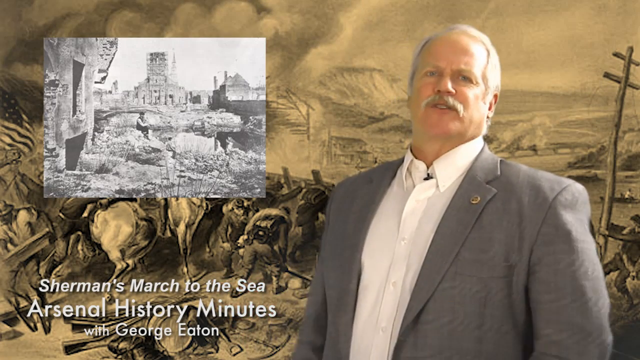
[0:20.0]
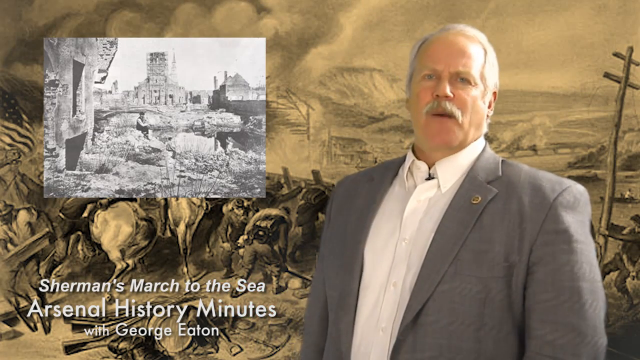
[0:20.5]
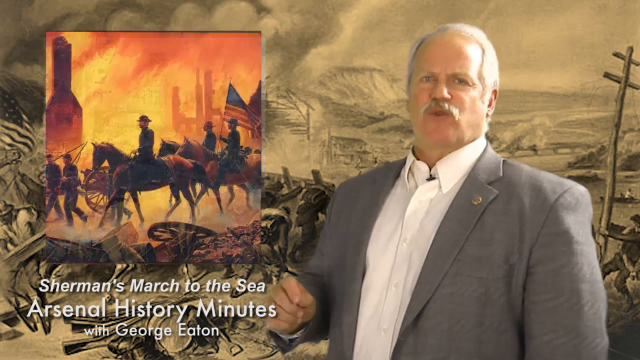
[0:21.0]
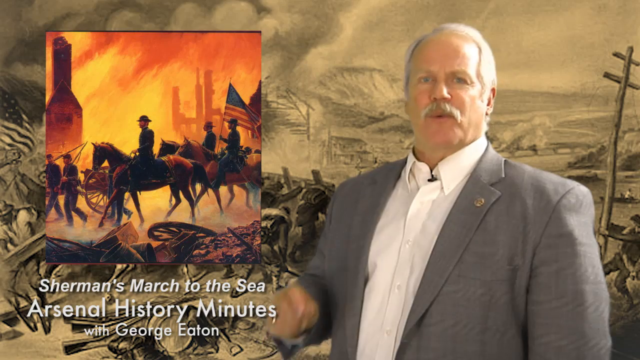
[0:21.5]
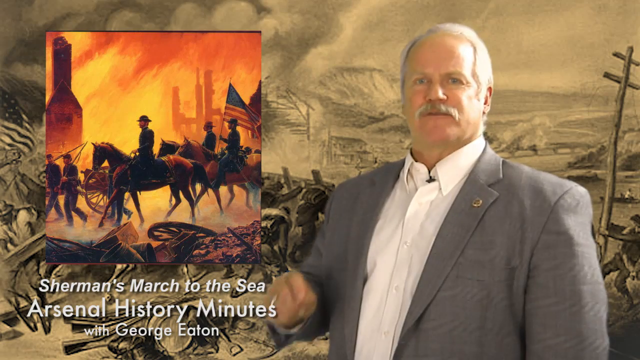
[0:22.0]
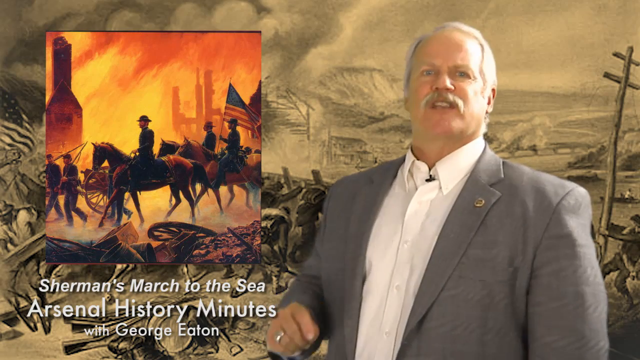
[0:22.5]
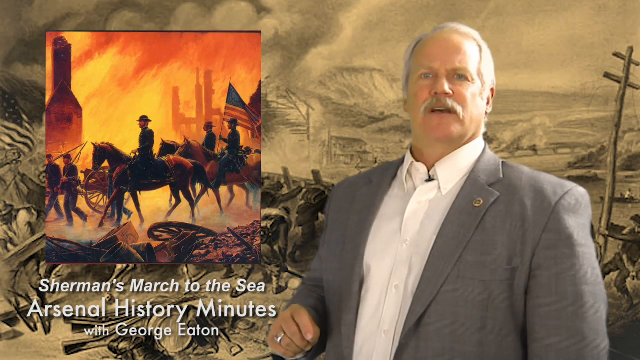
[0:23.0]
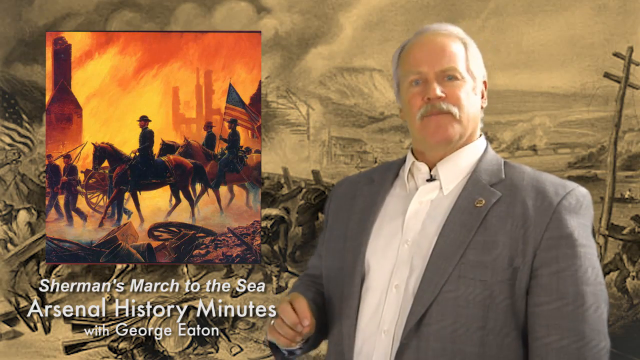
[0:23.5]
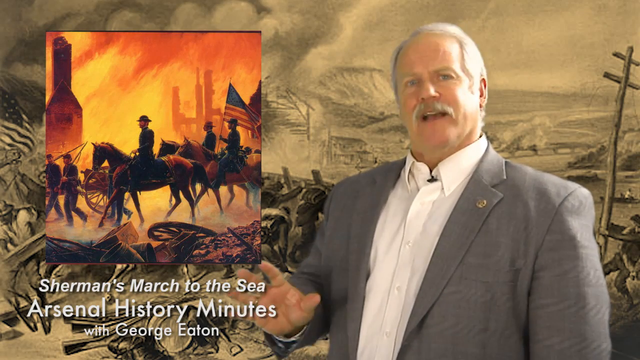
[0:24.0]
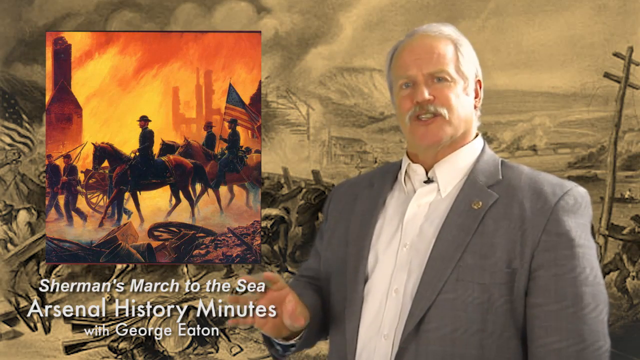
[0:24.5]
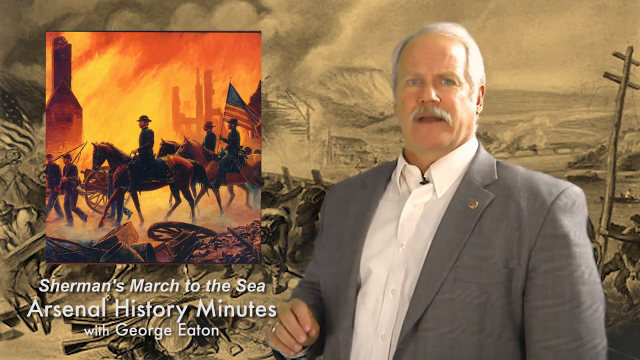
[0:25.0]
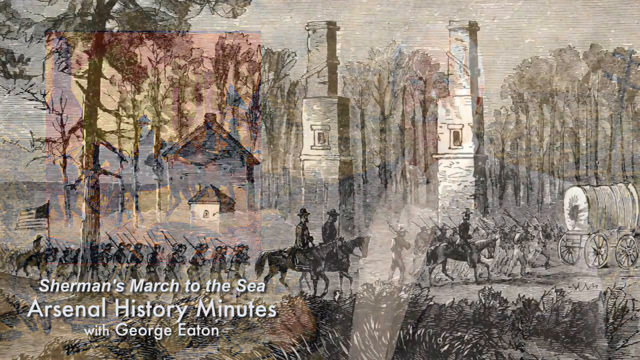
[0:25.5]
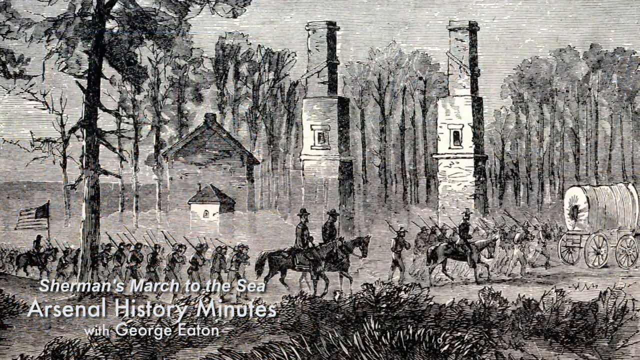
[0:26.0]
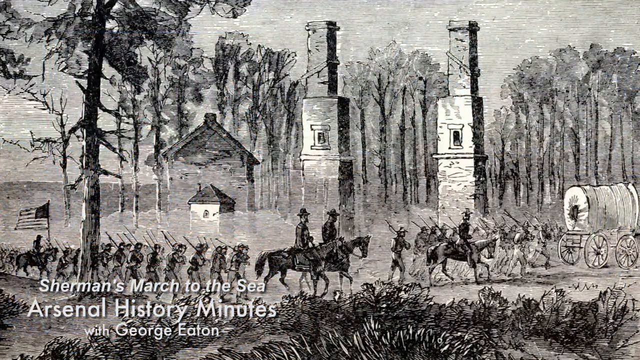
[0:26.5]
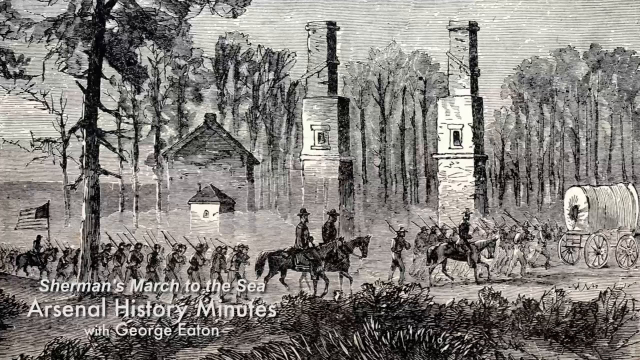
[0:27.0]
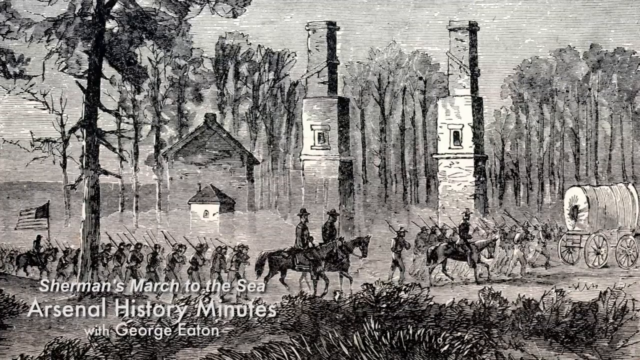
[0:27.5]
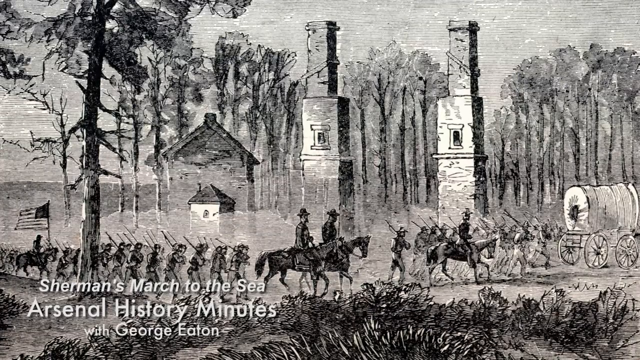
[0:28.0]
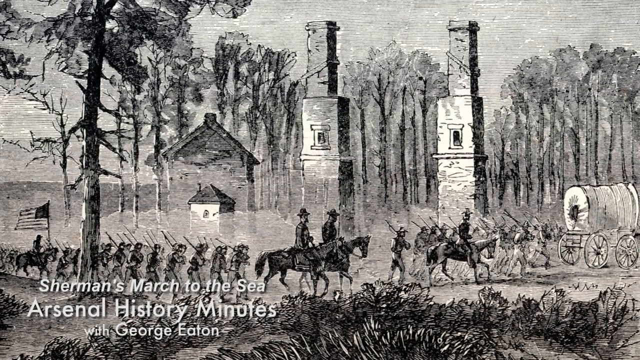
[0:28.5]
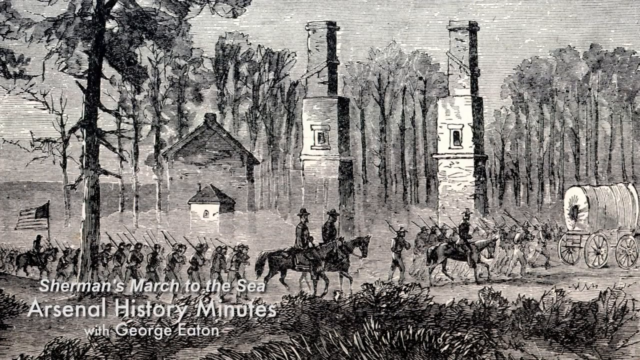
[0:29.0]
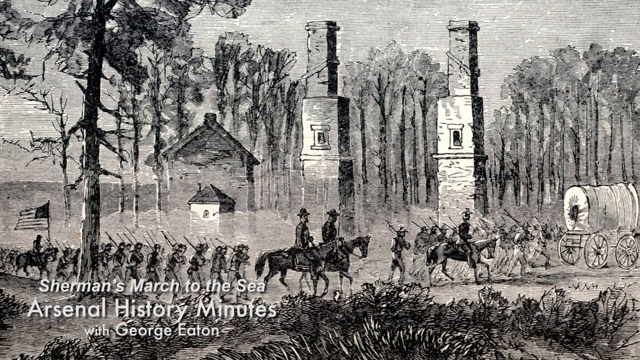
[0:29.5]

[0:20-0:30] A man who appears to be a narrator is on the right side of the frame, facing and talking to the viewer. He looks like a somewhat chubby white man with white hair and a big mustache, apparently in his 50s or 60s, and wears a gray coat over a white shirt, with a pin on the left collar of the coat. At the top left is a black and white picture of a man sitting down with ruins in the background, and white text at the bottom left reads "Sherman's March to the Sea, Arsenal History Minutes with George Eaton." The man talks and gestures with his right hand. The picture on the left changes to what looks like three men on horseback and two men walking with a cannon, marching toward the left, with a lot of fire in the background. The man at the back on horseback holds an American flag that waves backward toward the right. The man on the right keeps talking, waving his right hand, then turns his palm face down and puts his thumb and fingers together. The scene then transitions to a black and white picture of what looks like another army. In the middle, two men on horseback ride toward the right. On the left, a group of men who look like infantry, with rifles over their shoulders, march toward the right, and on the far left there appears to be an American flag waving toward the left. On the right there appear to be more infantrymen and one man on horseback, and a wagon moves toward the right. Two chimneys and trees are in the background.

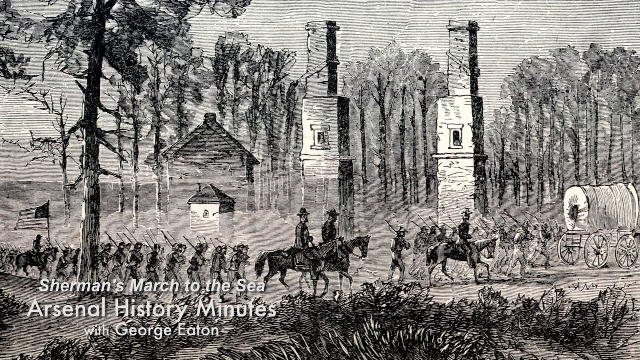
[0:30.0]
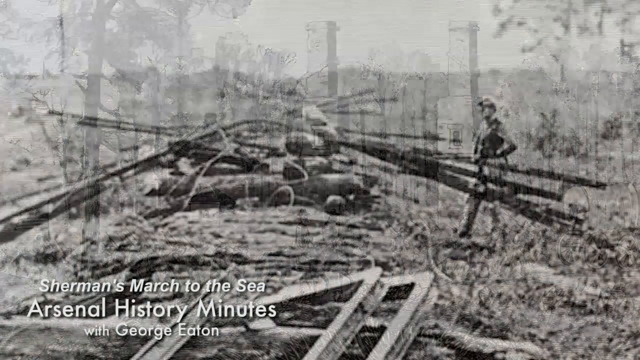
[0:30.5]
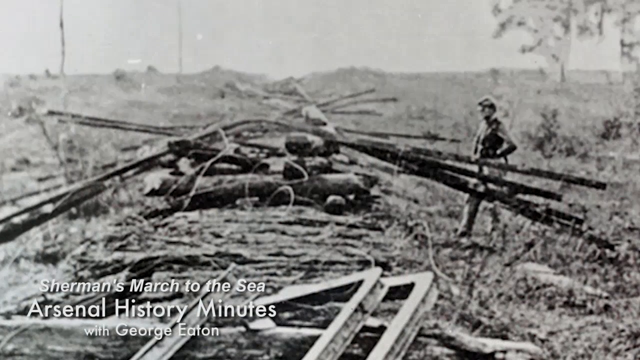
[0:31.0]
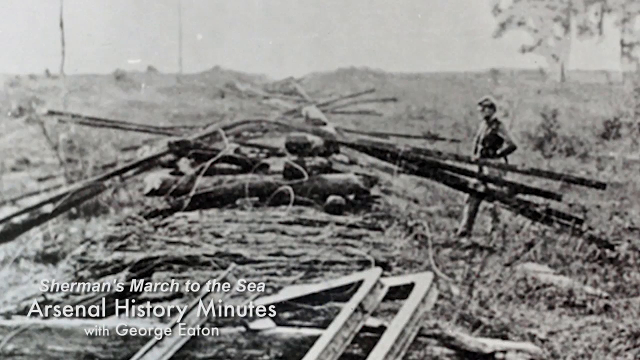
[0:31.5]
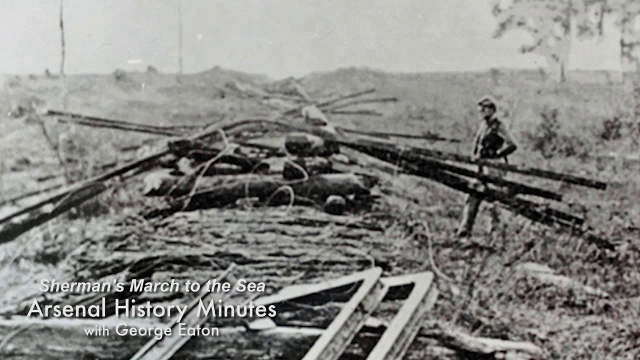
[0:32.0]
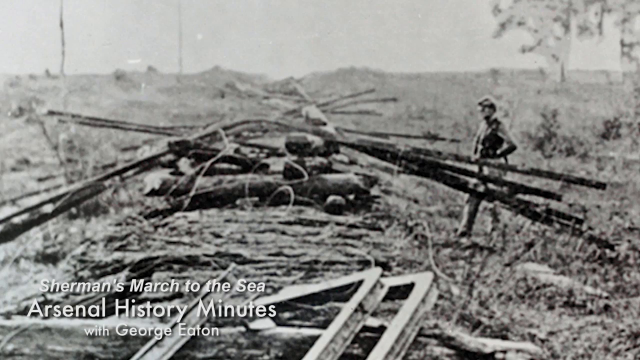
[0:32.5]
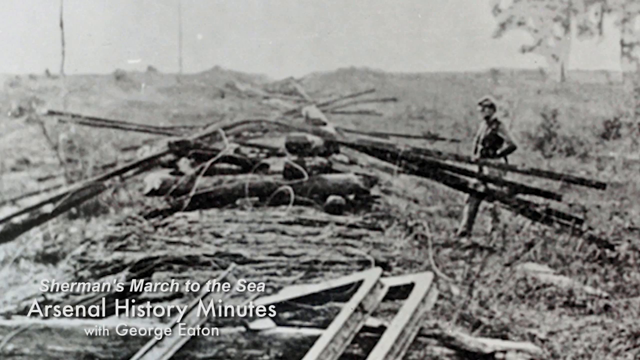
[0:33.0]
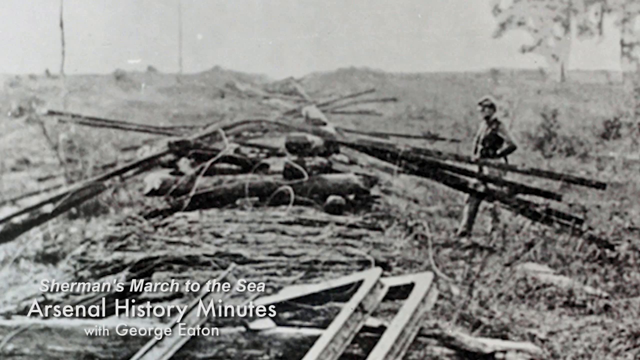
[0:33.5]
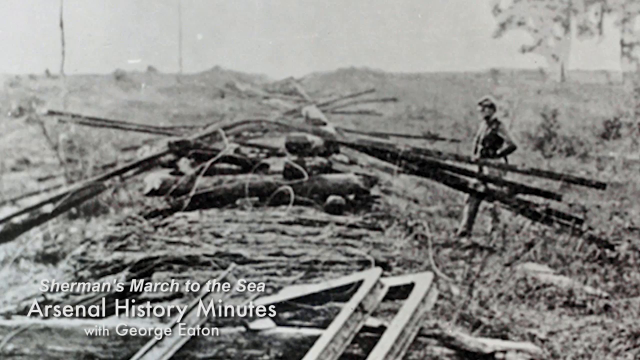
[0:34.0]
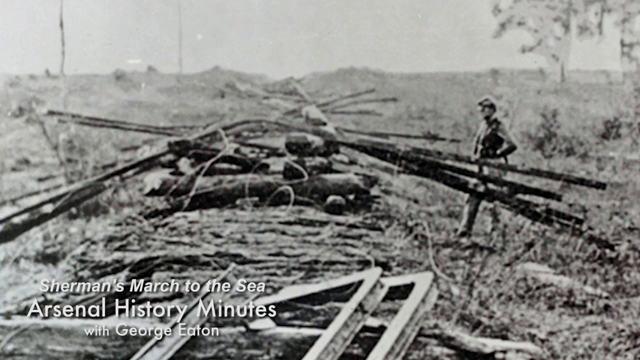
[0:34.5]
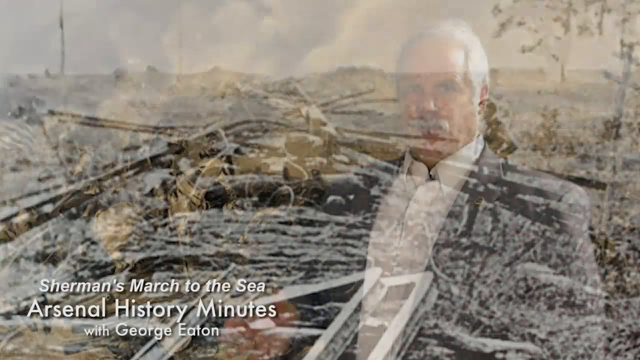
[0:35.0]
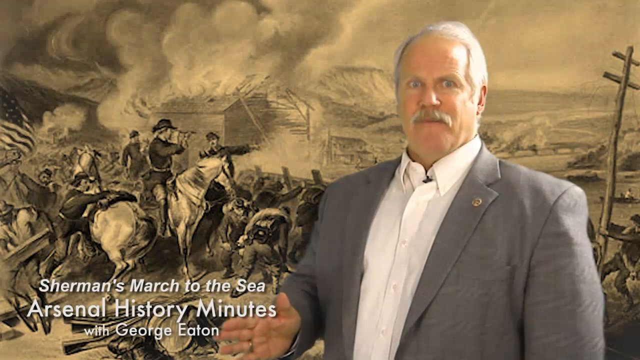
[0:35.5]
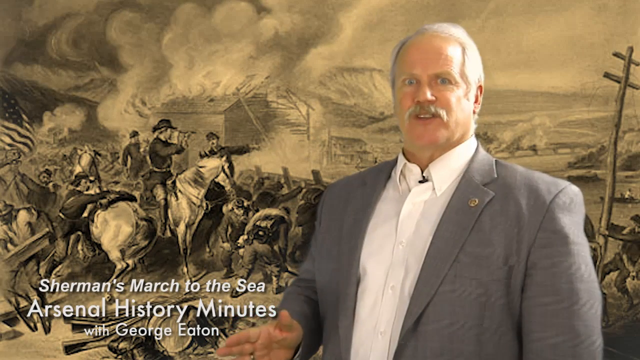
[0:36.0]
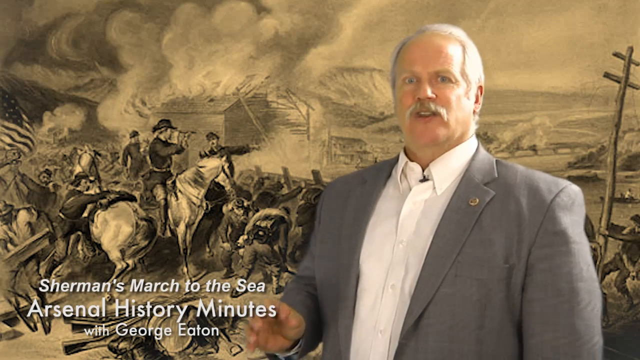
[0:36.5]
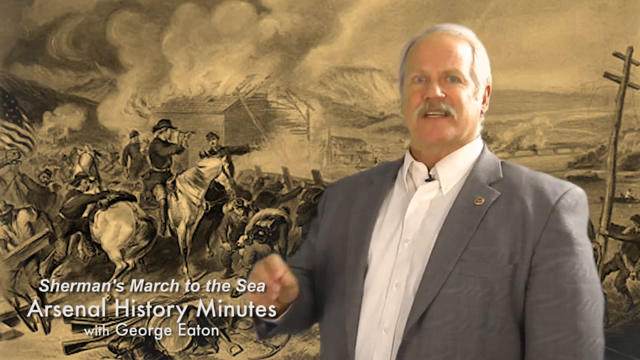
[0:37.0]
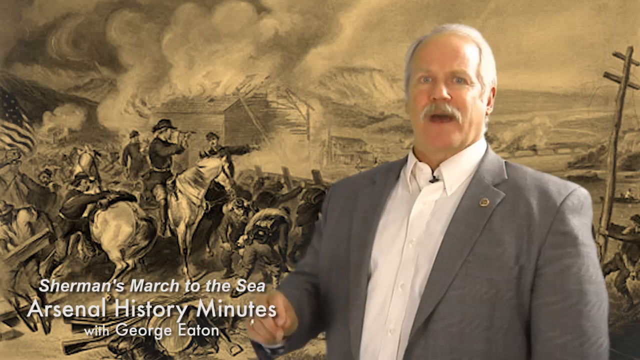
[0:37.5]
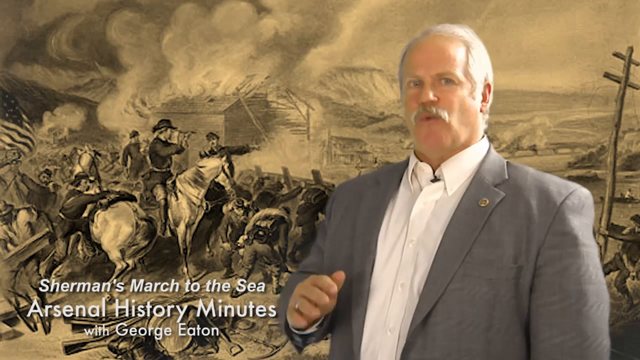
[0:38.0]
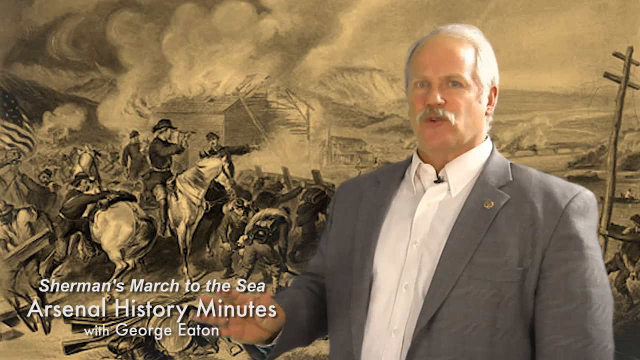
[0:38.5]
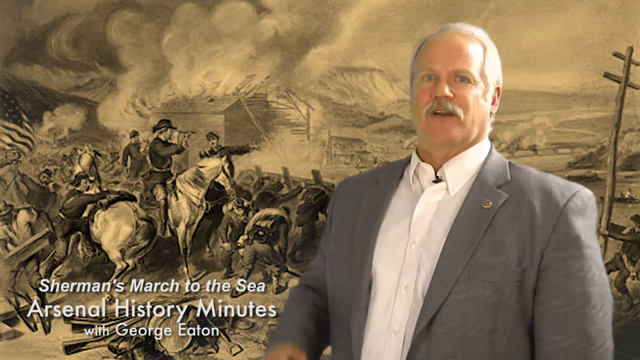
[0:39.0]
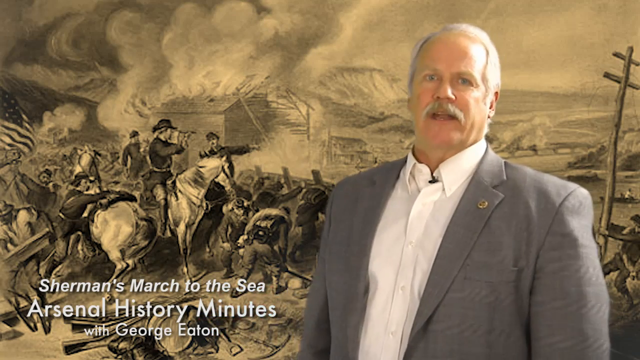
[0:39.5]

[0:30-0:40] A black and white picture shows what looks like an army on the march, with white text at the bottom left reading "Sherman's March to the Sea, Arsenal History Minutes with George Eaton." In the middle, two men sit on horseback heading to the right. On the right, a group of infantrymen, apparently with rifles over their shoulders, walk toward the right, followed by one more man on horseback heading right and a wagon on the far right. On the left, around 50 infantrymen with rifles over their shoulders, and an American flag waves to the left. In the background are many trees, two tall chimneys in the middle, and some roofs of a house on the left. The scene changes to a very blurry black and white image that appears to show ruins with a lot of wood in the middle; on the right, a man apparently carries wood toward the middle while facing left. The video then returns to the narrator, a white man in a gray suit and white shirt with a white mustache, who looks a little fat and in his 60s. He faces the viewer, turned slightly to the right, and waves his right hand as he talks. He makes almost a fist, pressing his four fingers and thumb together, then puts his palm down and waves his arms in front of him.